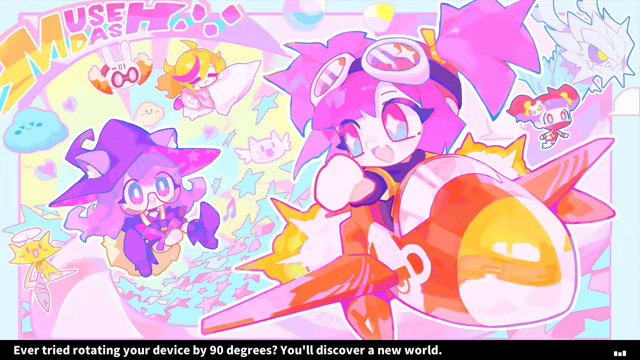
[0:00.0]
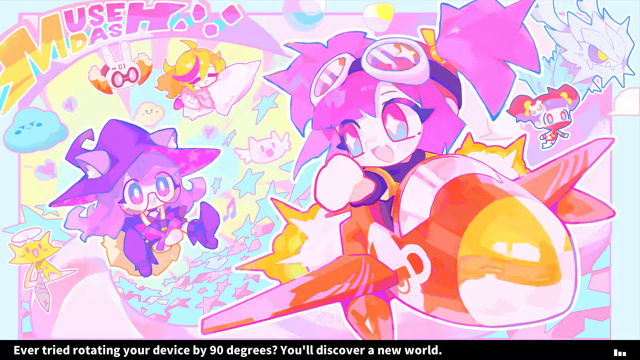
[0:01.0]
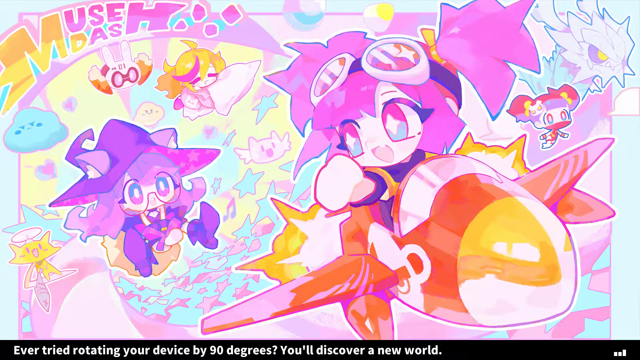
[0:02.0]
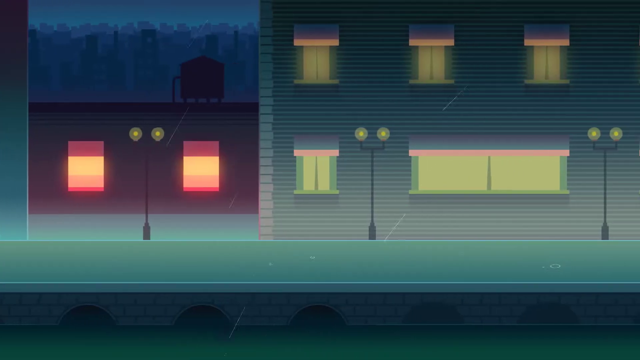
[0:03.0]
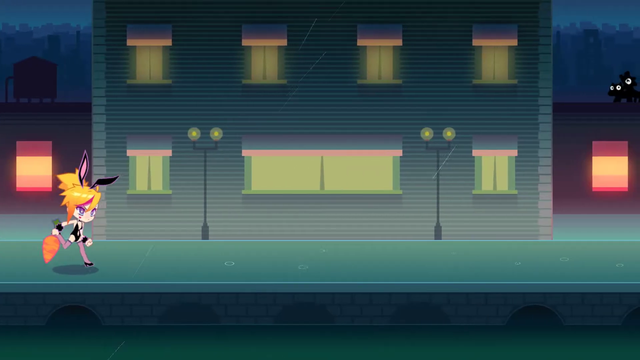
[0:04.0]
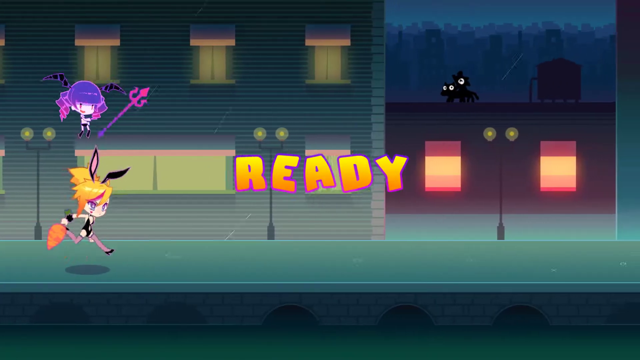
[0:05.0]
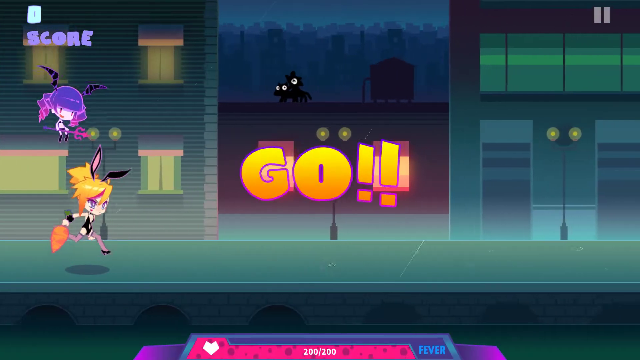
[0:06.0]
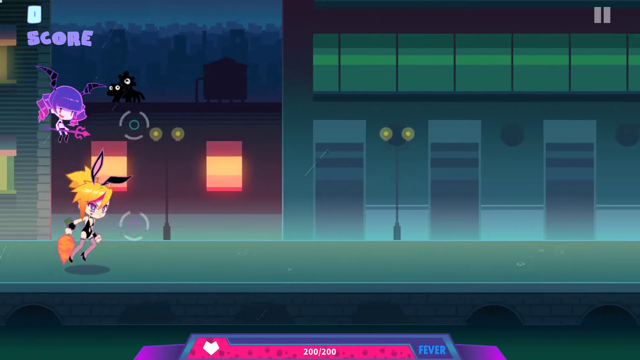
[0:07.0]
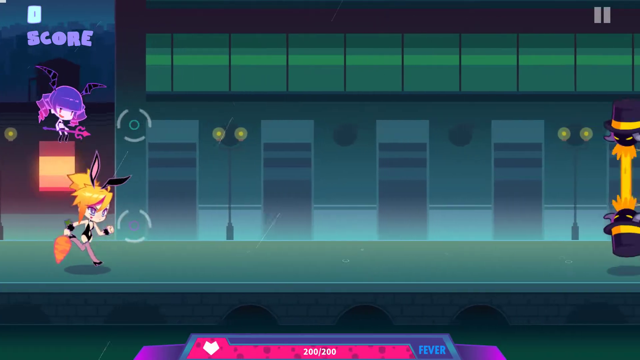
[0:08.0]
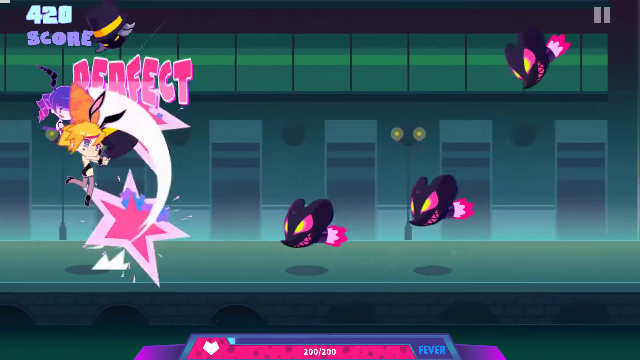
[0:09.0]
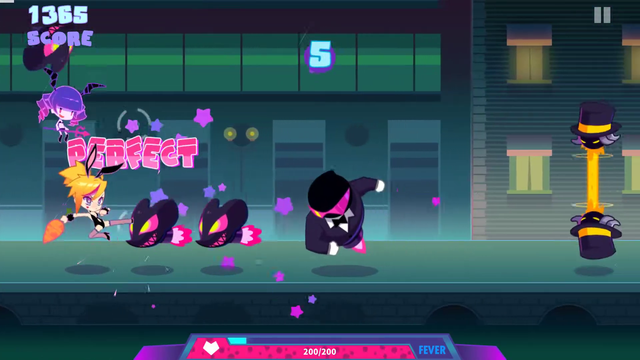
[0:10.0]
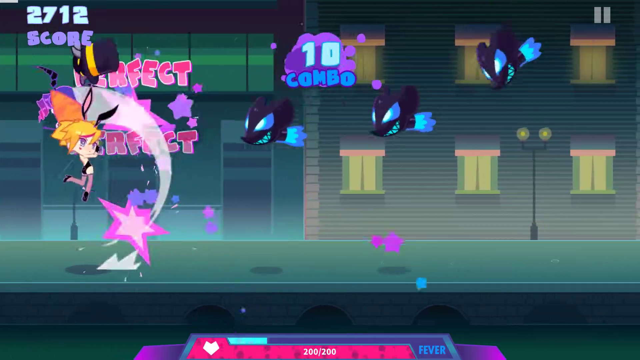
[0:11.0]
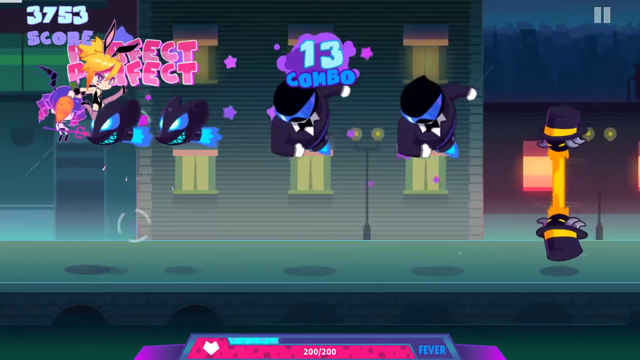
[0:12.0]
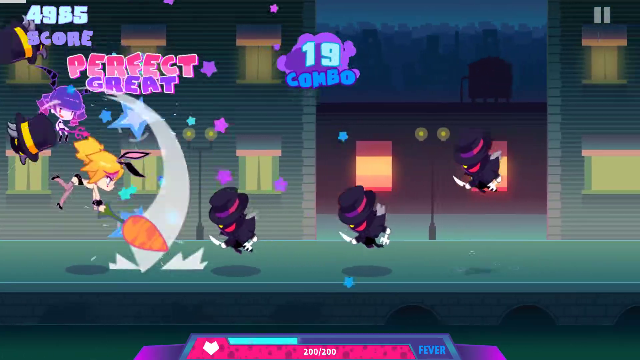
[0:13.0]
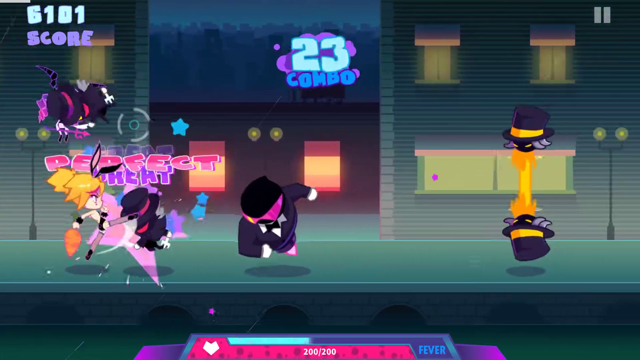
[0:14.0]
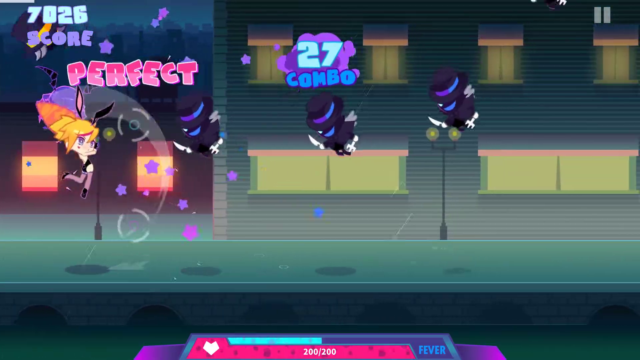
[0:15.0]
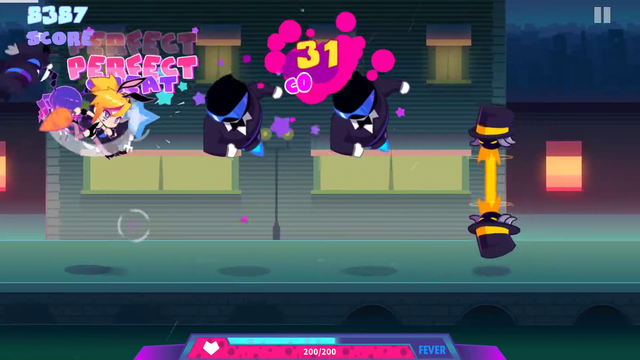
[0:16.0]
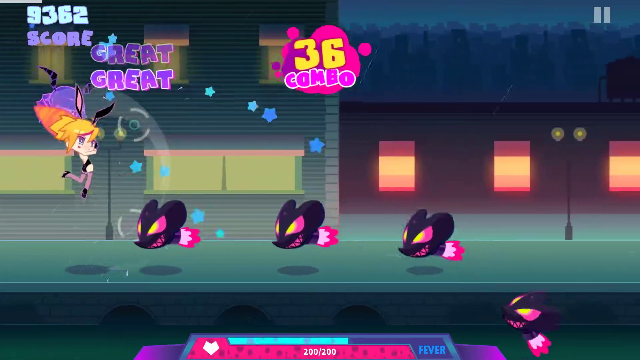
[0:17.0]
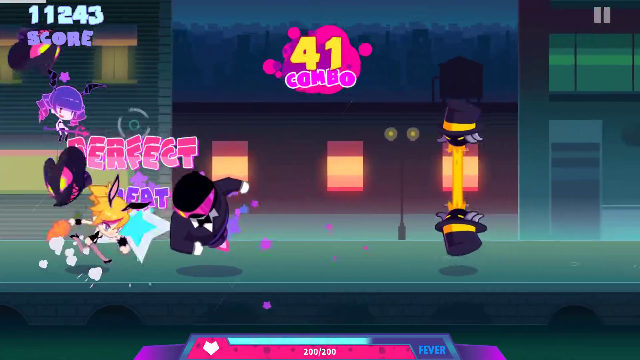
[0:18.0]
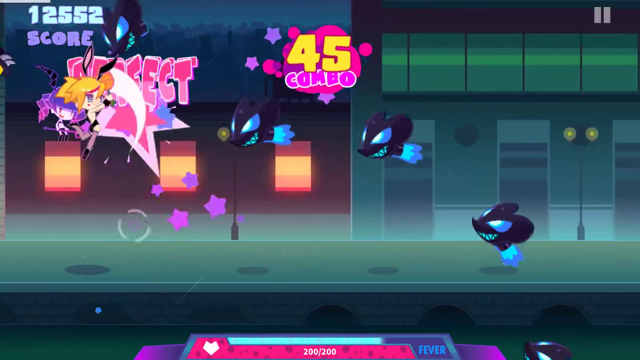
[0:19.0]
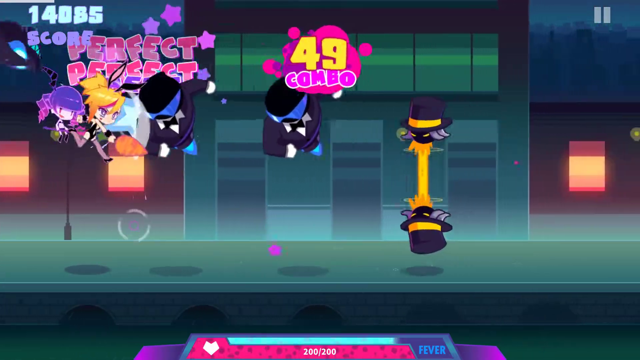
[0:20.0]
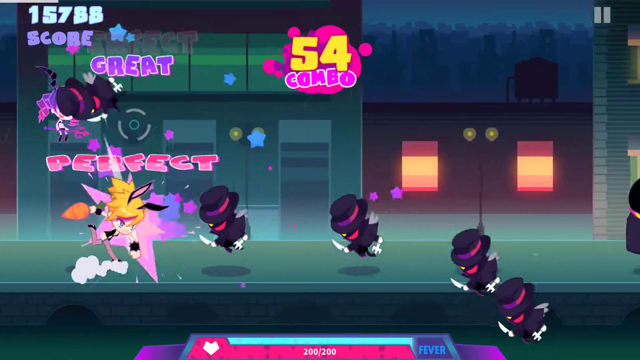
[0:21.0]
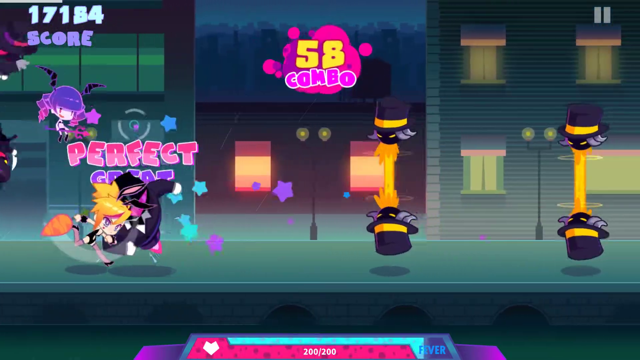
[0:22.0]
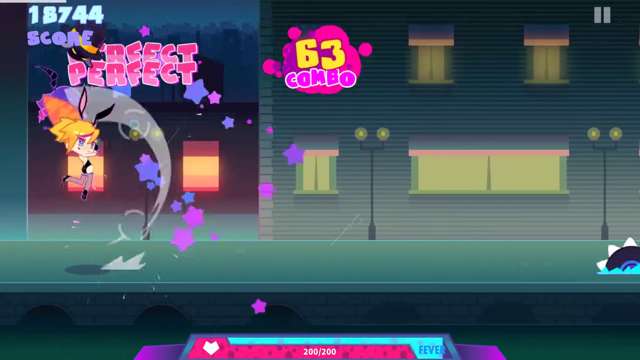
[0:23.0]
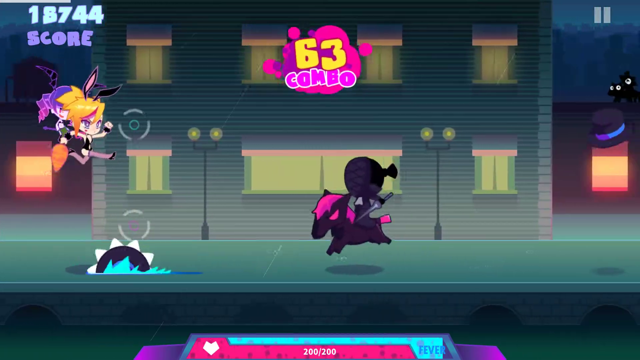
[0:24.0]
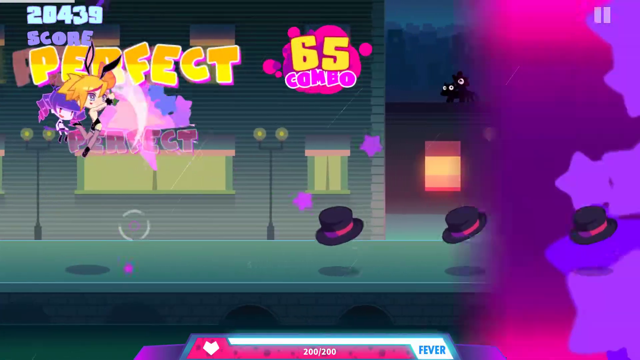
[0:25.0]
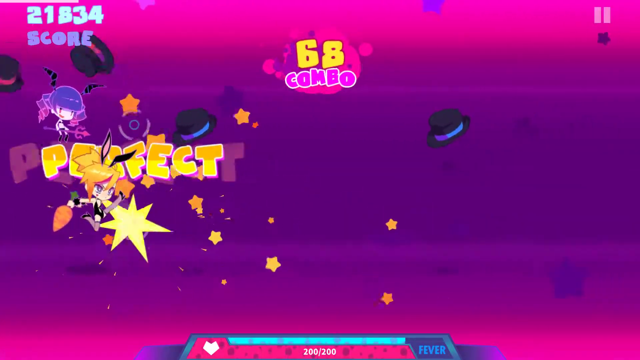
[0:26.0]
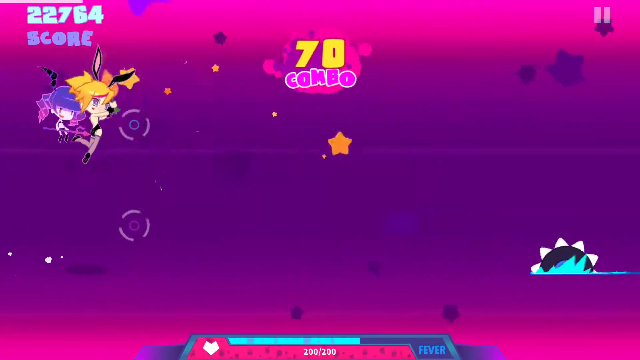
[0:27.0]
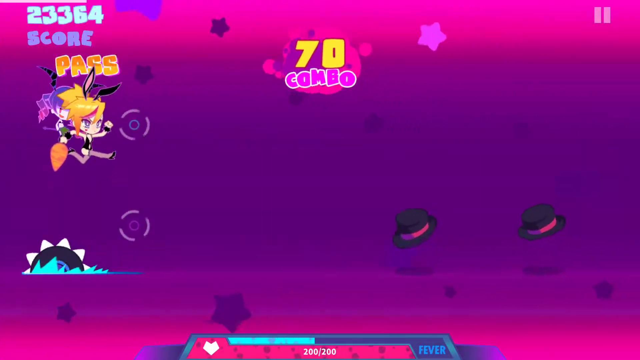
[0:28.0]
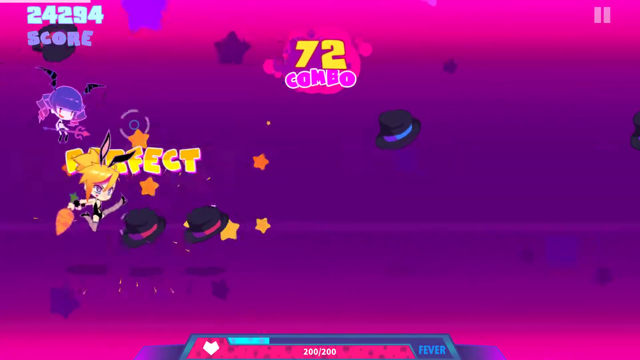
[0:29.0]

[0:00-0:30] A girl anime character with purple hair tied up in a ponytail is on an airplane, which is very small. The airplane is red with an orange tip. To the left of her is another female anime character wearing white sunglasses, a purple witch hat and a purple dress. The scene then cuts to a video game scene of a city. The camera pans to the right, so a bit of a street and a sidewalk move from right to left across the screen. Buildings are lined up along the side of the road, along with street lights. The view passes a large building, and then the word "READY" appears in orange across the middle of the screen. Next, a little girl anime character with black bunny ears, a tight black leather suit, stockings and high heels runs along the sidewalk. Above her is a little fairy. Bugs fly at her, and when she catches them the word "PERFECT" appears at the very top of the screen.